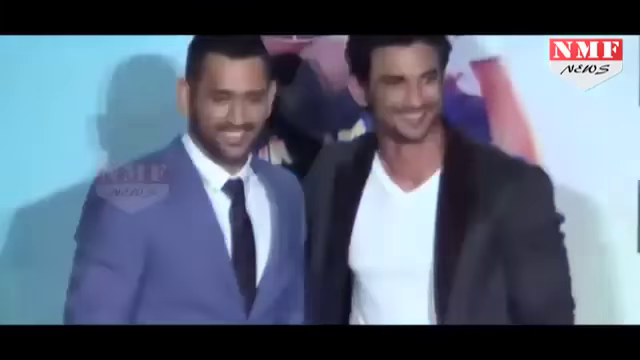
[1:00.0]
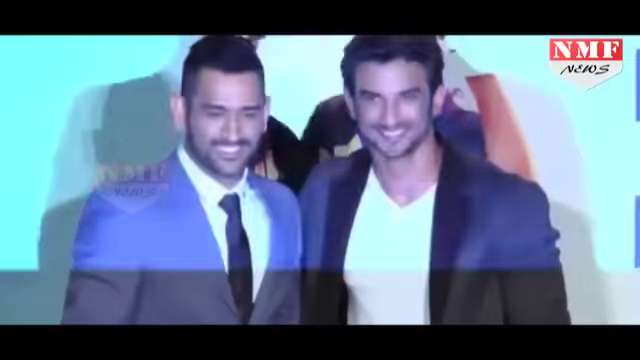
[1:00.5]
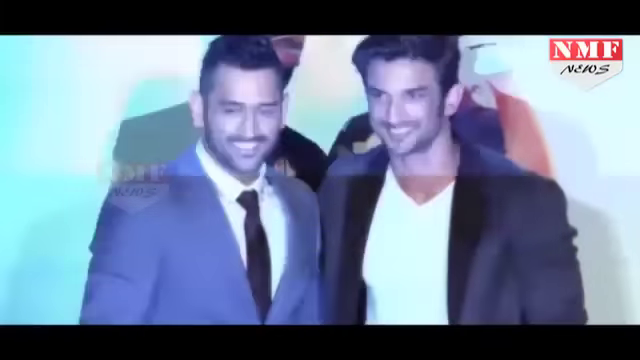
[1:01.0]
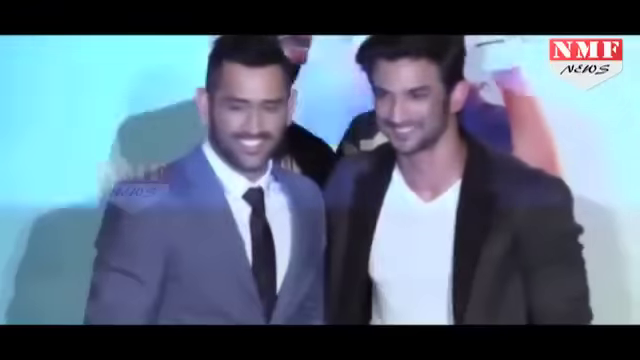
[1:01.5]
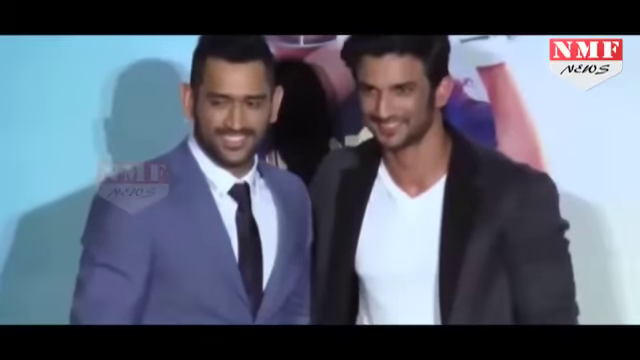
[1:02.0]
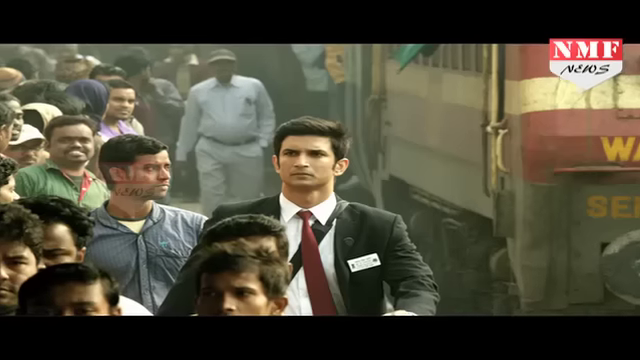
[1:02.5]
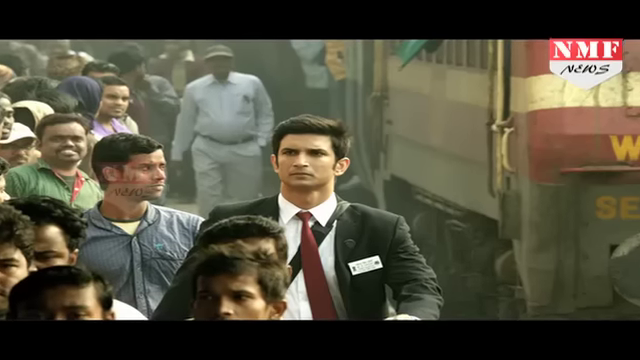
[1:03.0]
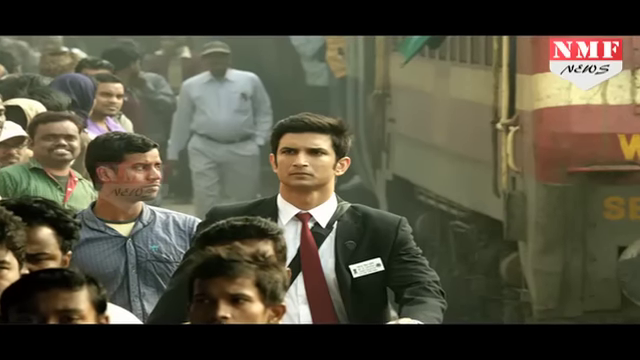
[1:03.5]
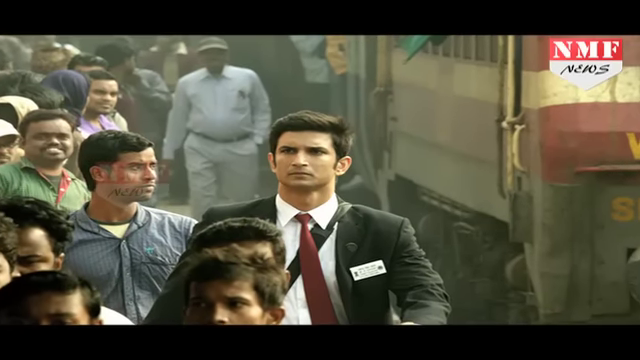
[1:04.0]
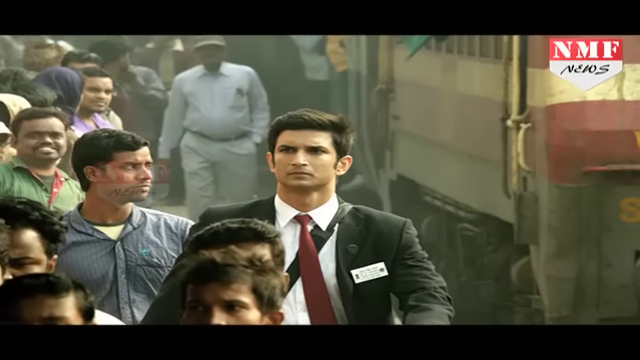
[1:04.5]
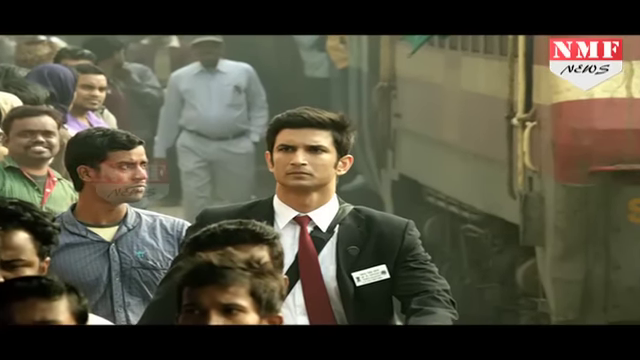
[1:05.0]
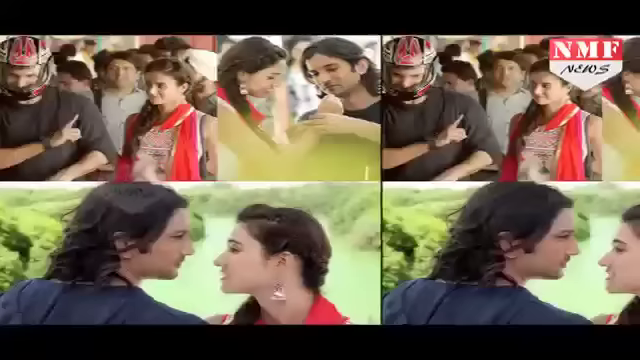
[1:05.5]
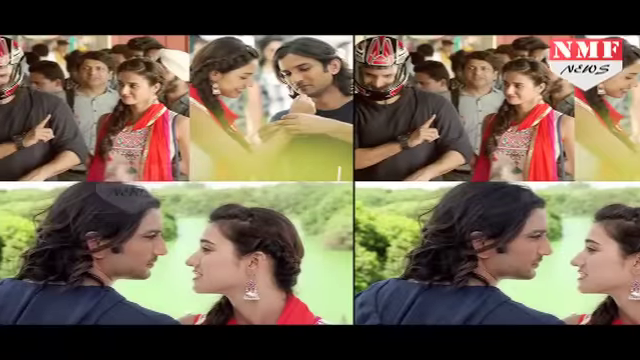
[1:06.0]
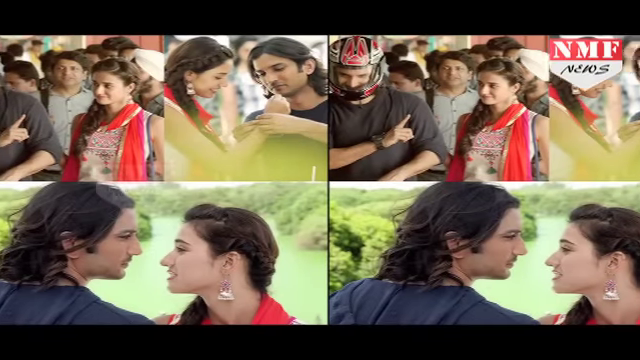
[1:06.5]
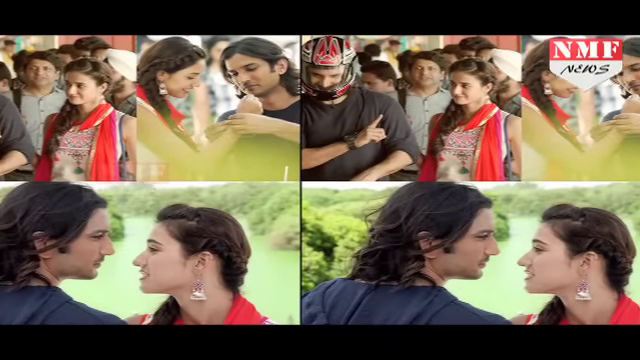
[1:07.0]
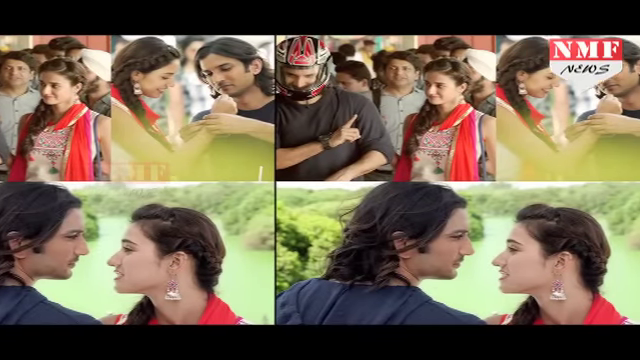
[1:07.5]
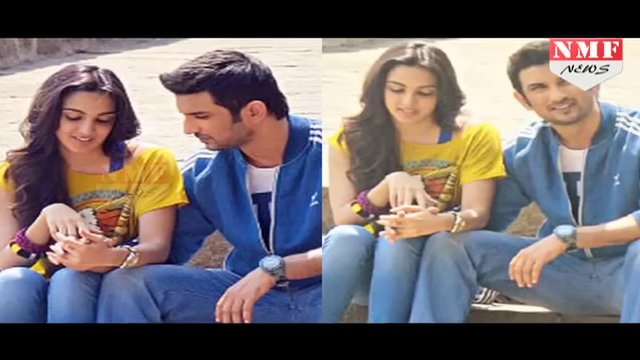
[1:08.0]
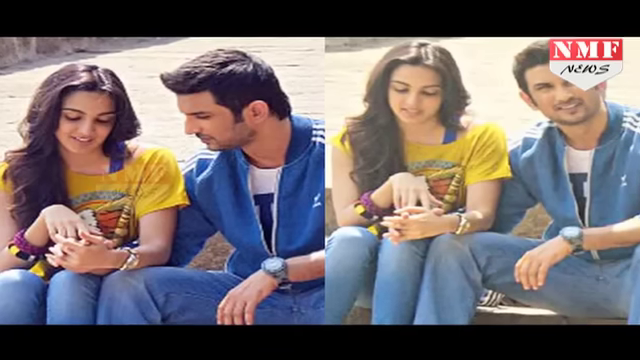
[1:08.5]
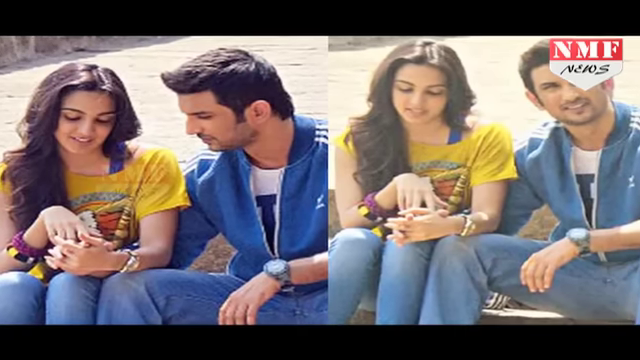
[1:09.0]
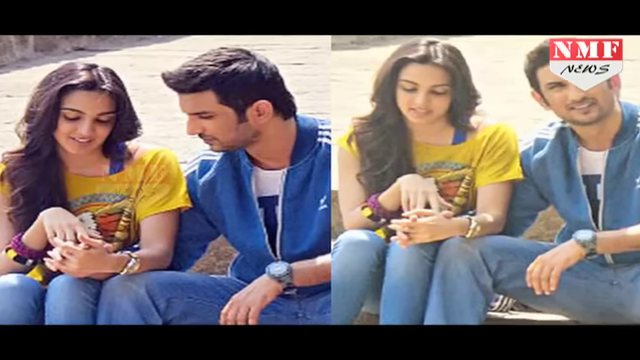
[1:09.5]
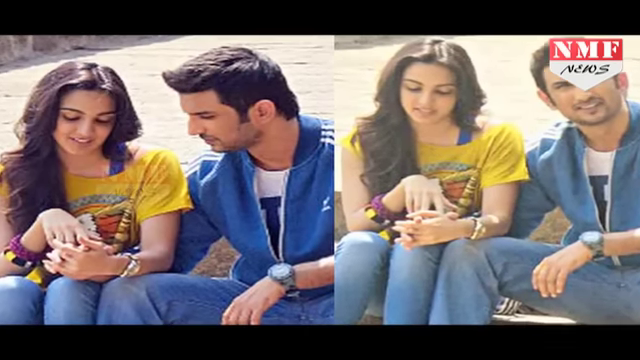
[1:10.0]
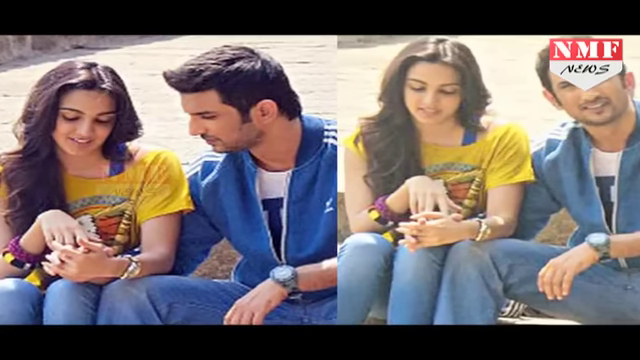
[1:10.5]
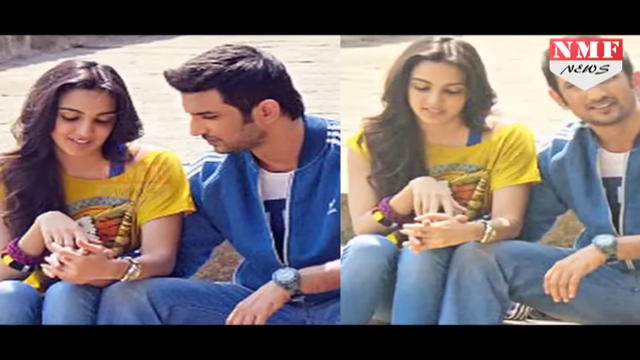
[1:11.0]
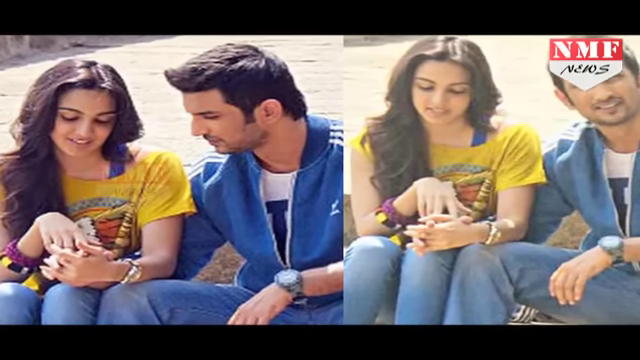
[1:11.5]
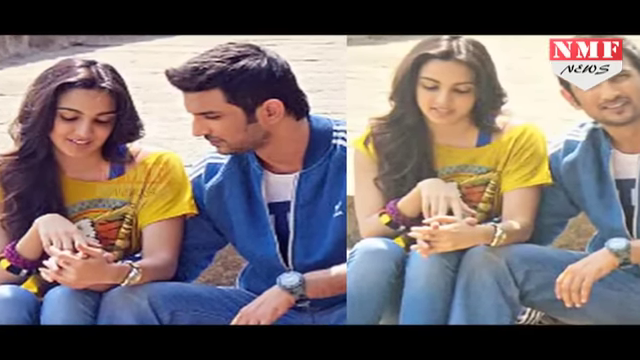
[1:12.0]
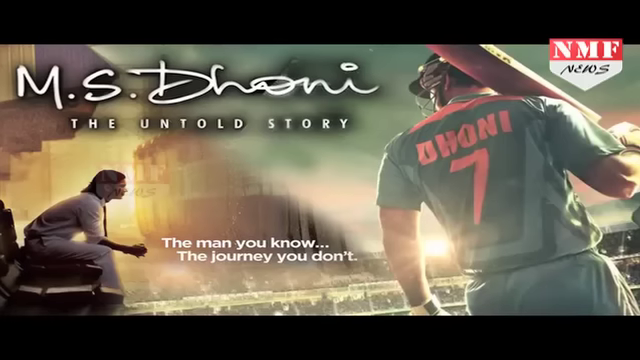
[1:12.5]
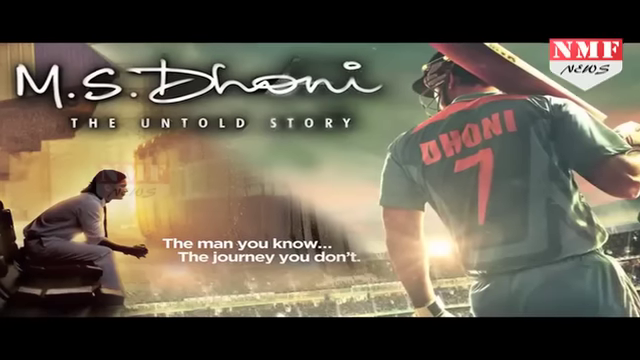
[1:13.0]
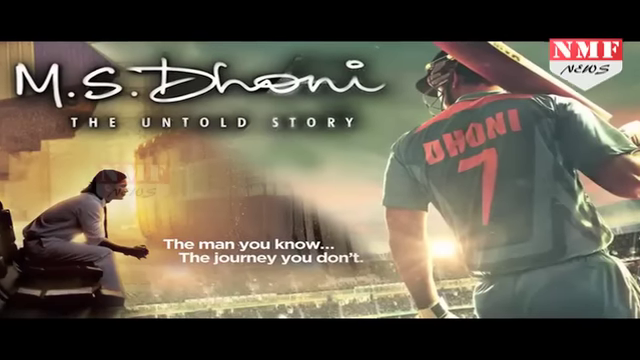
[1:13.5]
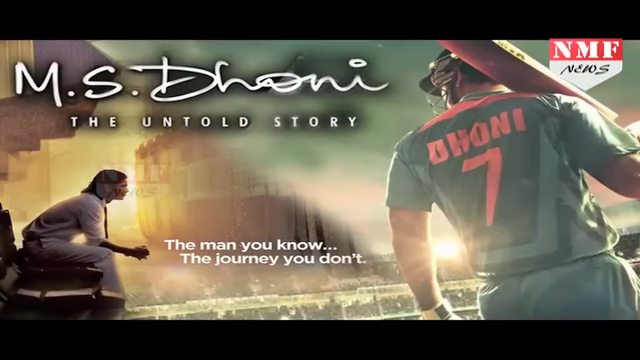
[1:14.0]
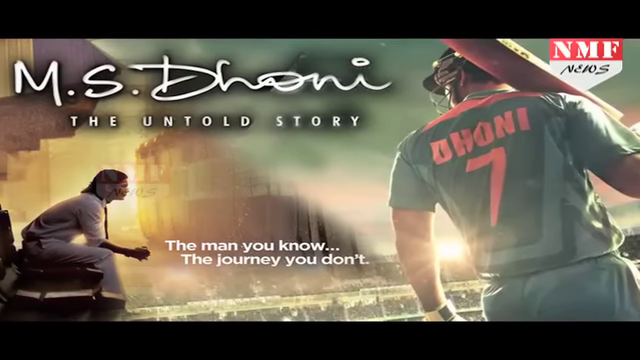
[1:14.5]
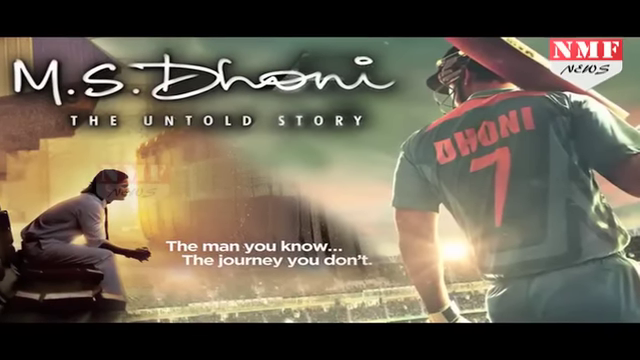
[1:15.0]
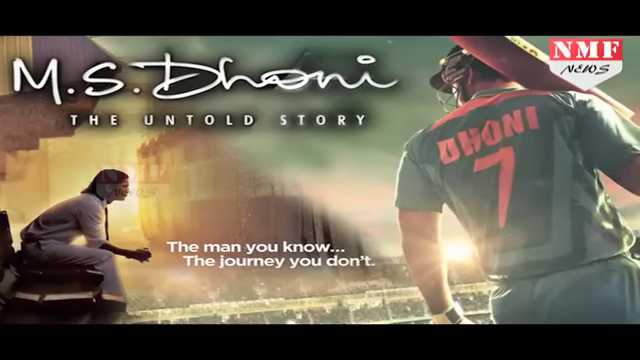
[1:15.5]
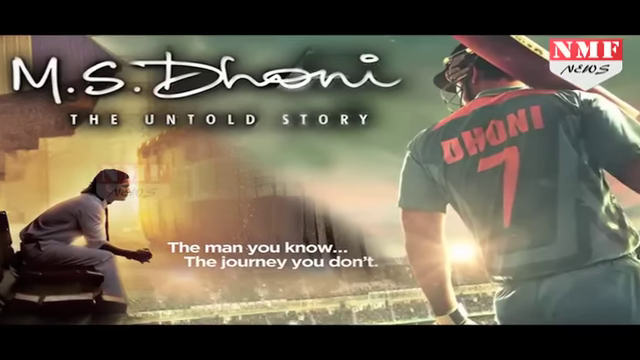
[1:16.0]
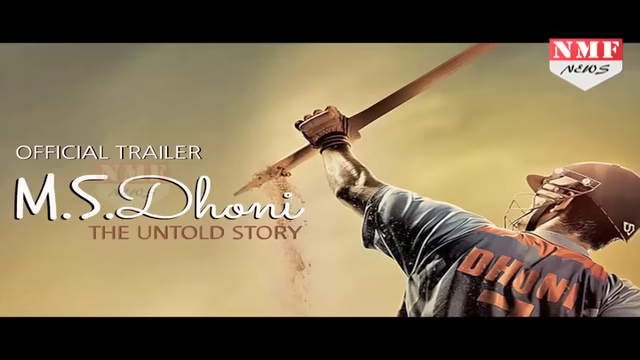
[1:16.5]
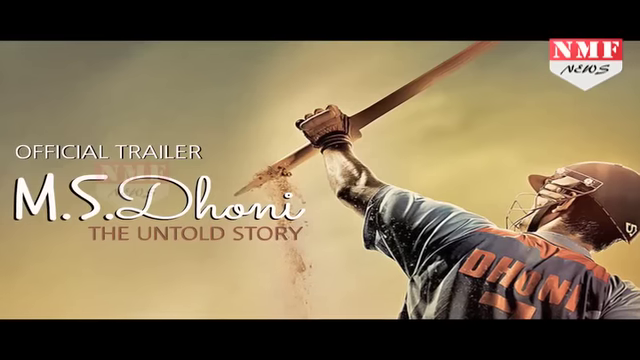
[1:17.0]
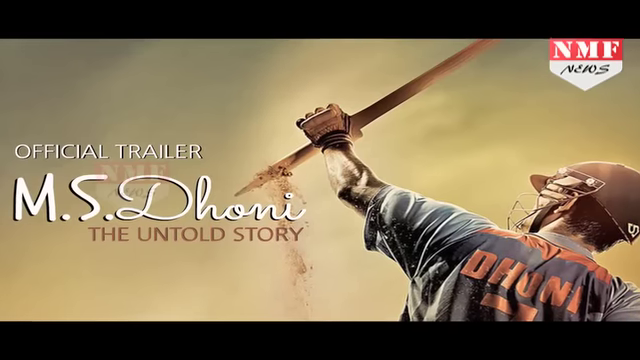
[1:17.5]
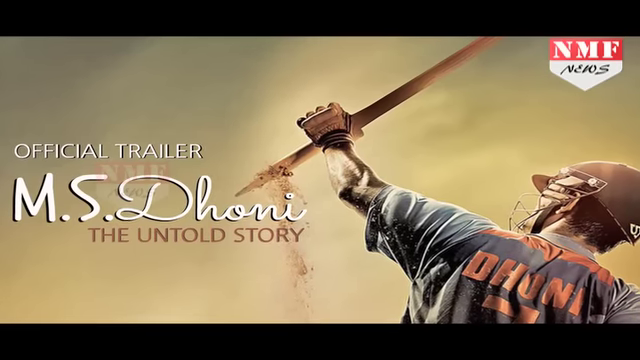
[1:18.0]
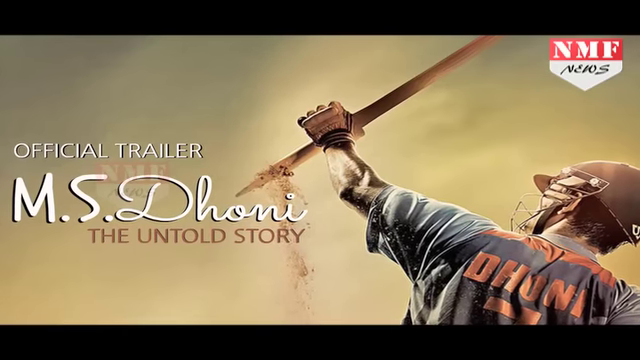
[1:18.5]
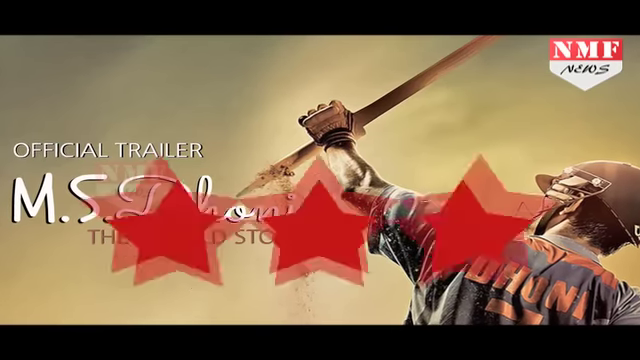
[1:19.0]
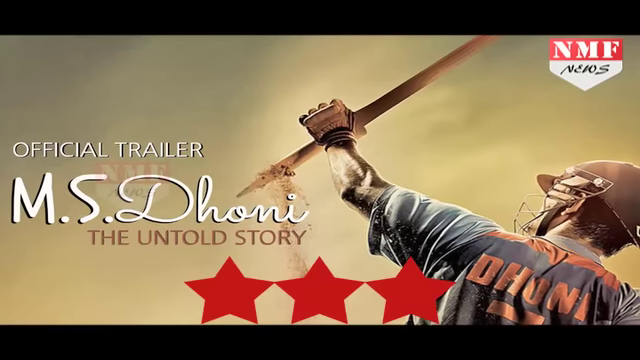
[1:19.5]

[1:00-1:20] The character stands in front of the poster for his movie with another man who has dark hair and wears a light blue suit, a dark gray tie and a white shirt. Both smile for the cameras as the flashes continue. The screen then shows split scenes of him with a young lady with dark hair; they seem to be in a relationship, with many romantic pictures of them staring into each other's eyes. More pictures show them sitting beside a river or stream in casual dress, with him looking at her hand, and then holding hands; they look to be in love. The video returns to the earlier poster of the movie, MS Dhoni, the untold story, which is a bit hazy. It shows his jersey with the number seven, and to the left, him sitting and contemplating. Another notice of the official trailer appears with three red stars.